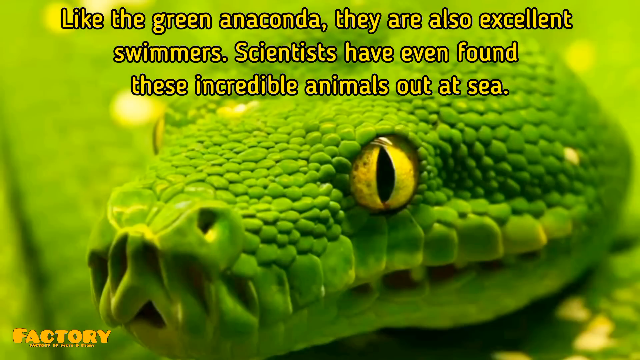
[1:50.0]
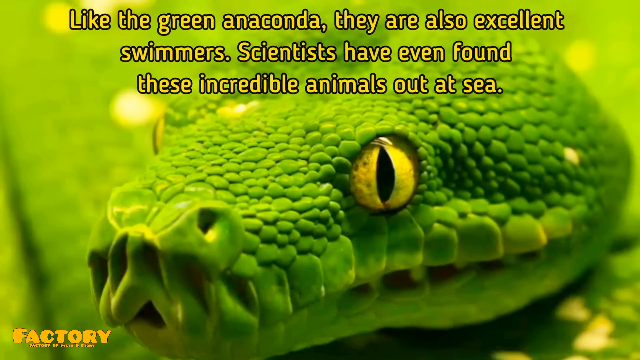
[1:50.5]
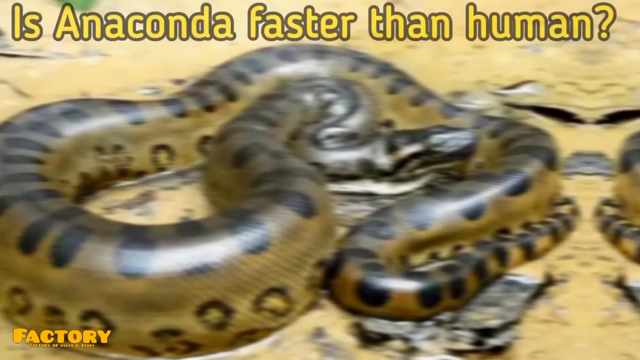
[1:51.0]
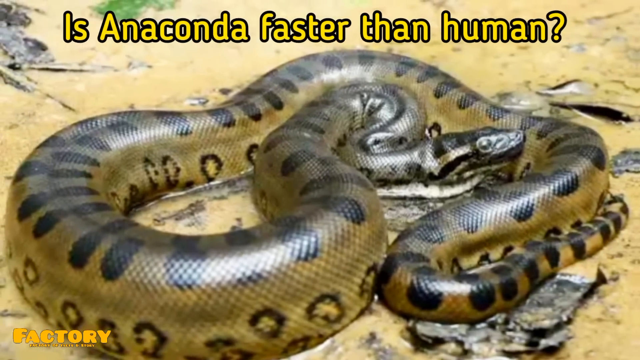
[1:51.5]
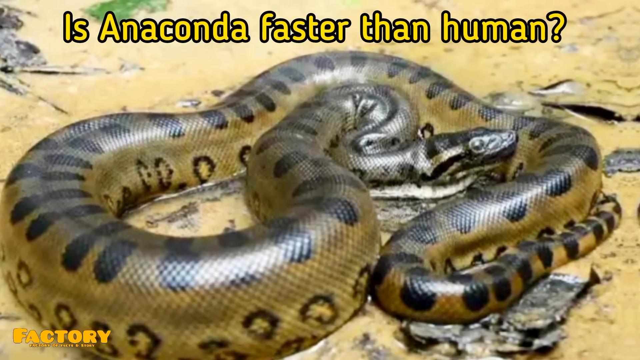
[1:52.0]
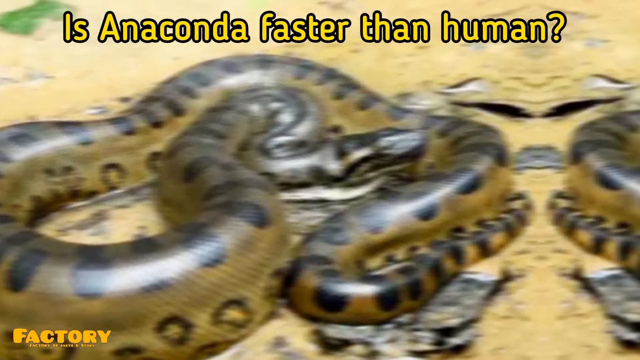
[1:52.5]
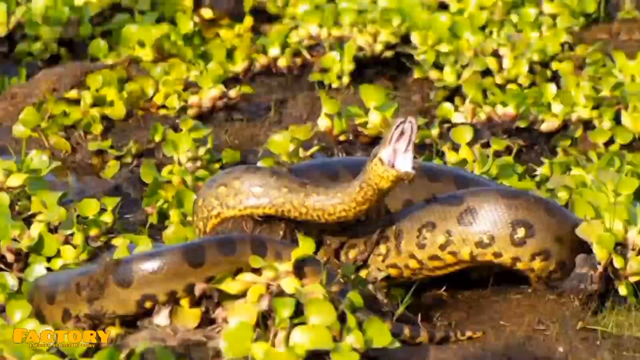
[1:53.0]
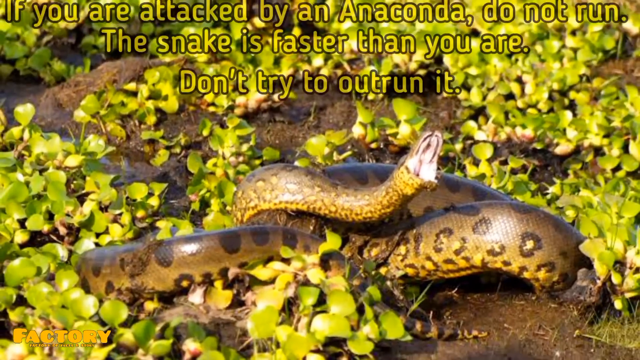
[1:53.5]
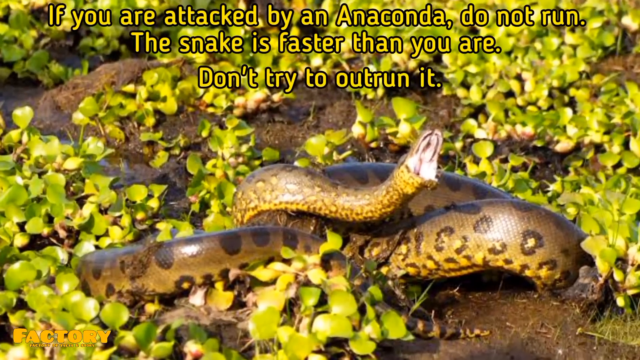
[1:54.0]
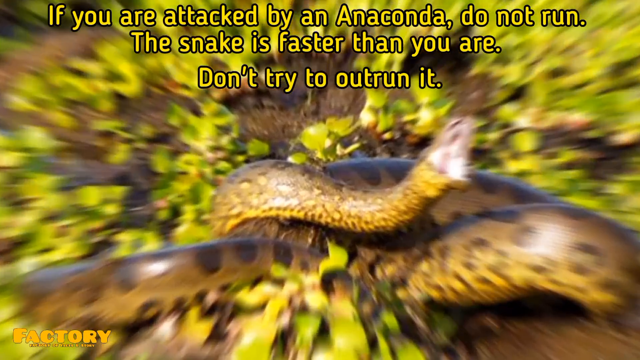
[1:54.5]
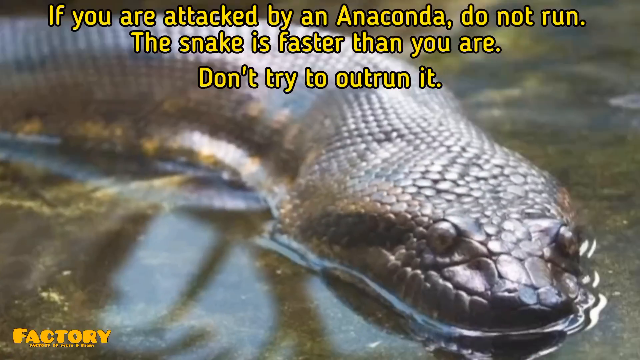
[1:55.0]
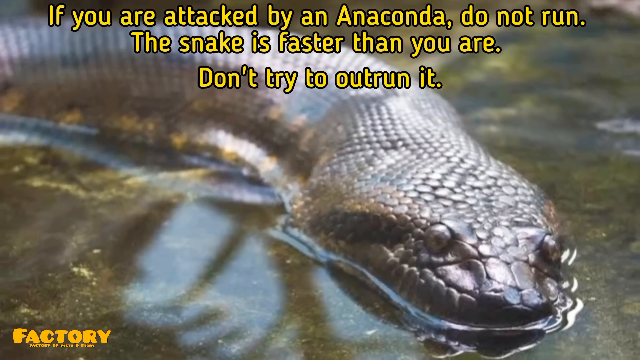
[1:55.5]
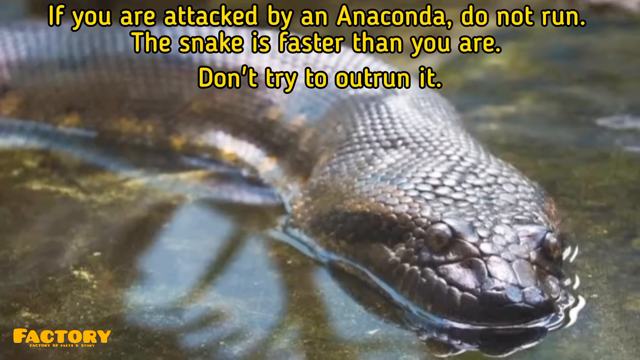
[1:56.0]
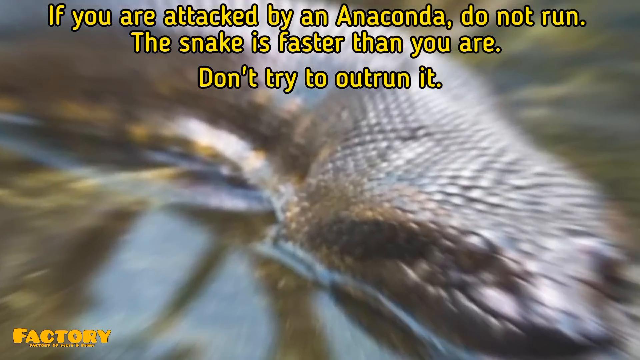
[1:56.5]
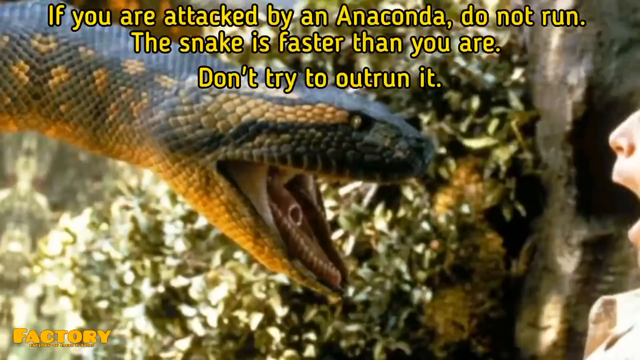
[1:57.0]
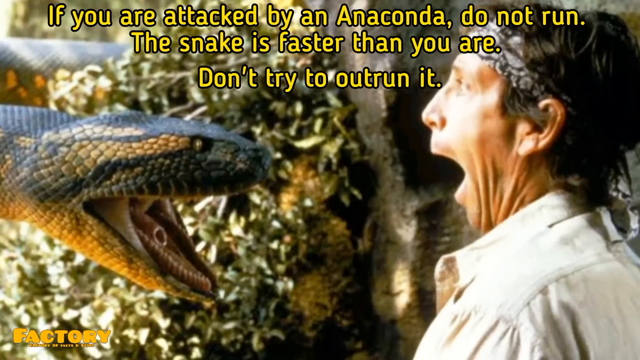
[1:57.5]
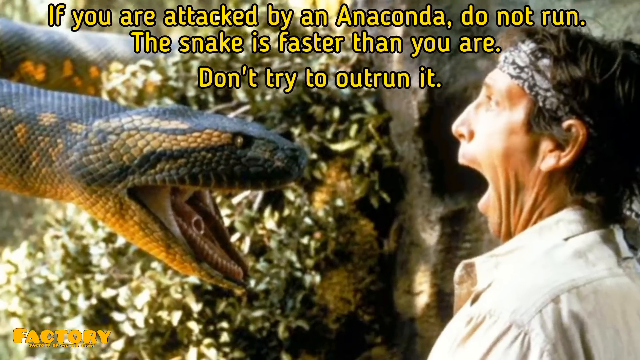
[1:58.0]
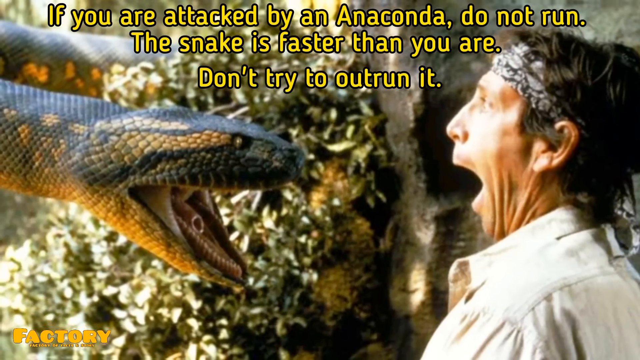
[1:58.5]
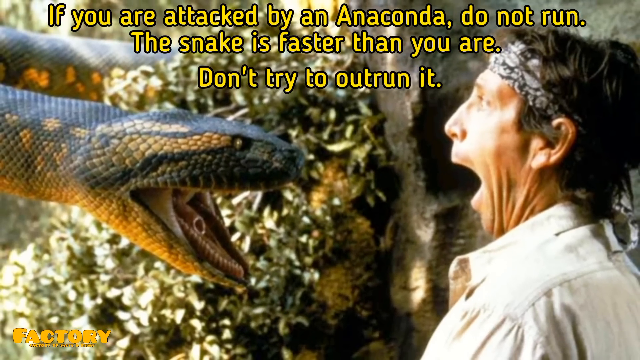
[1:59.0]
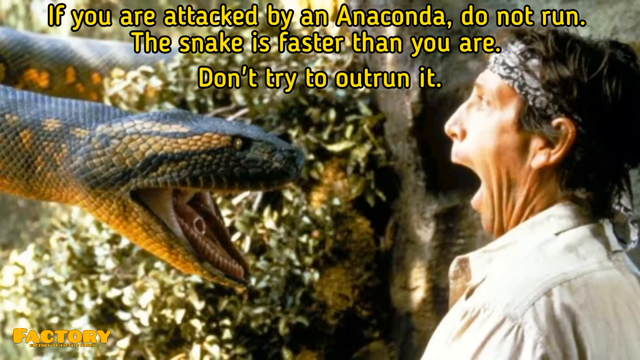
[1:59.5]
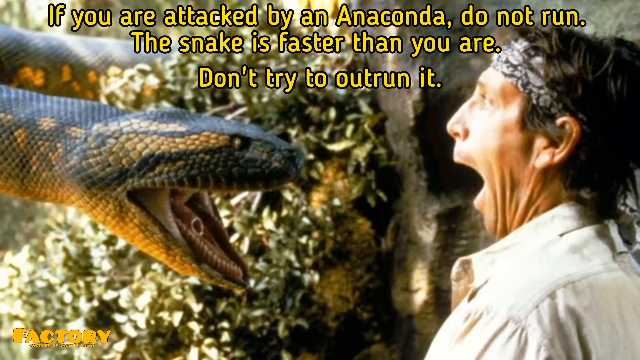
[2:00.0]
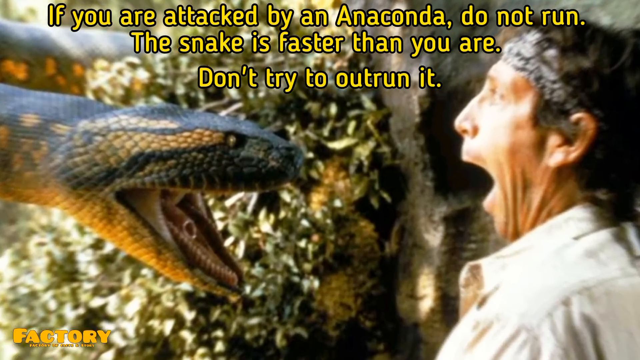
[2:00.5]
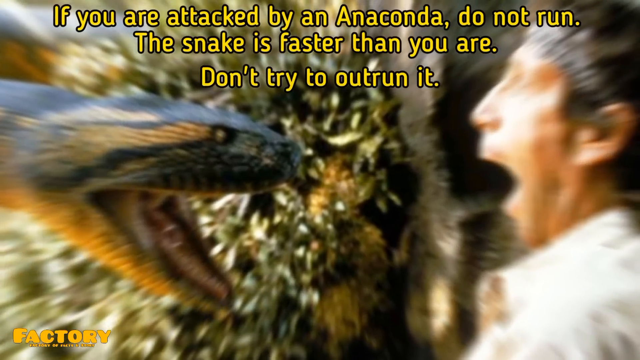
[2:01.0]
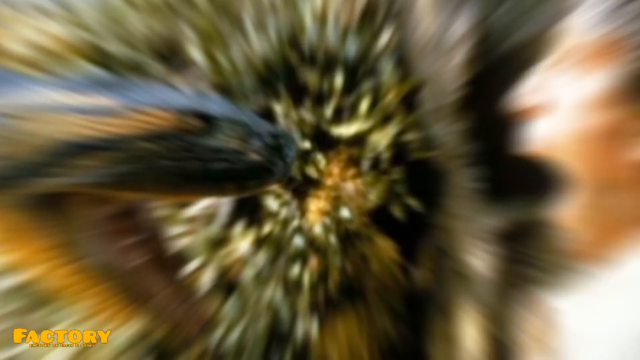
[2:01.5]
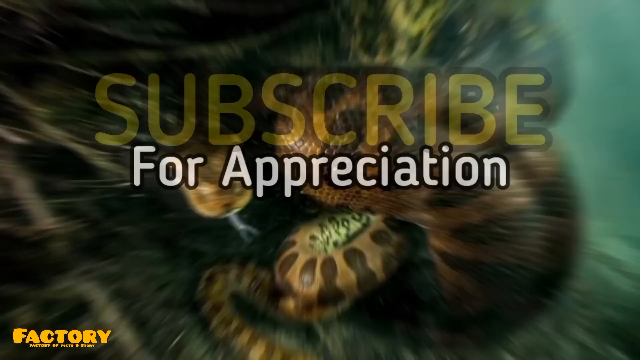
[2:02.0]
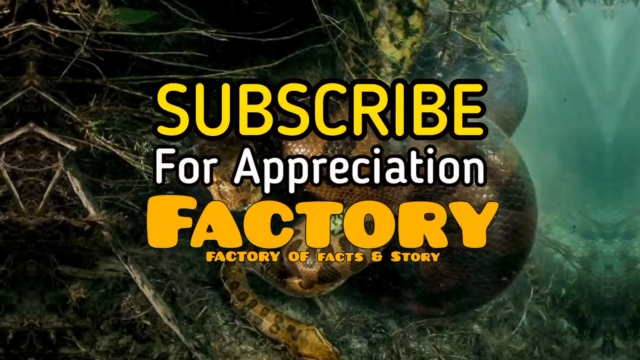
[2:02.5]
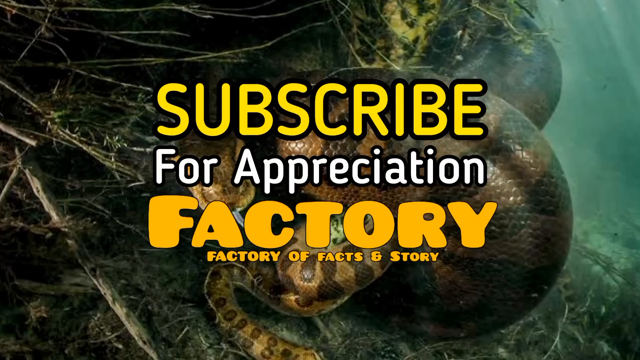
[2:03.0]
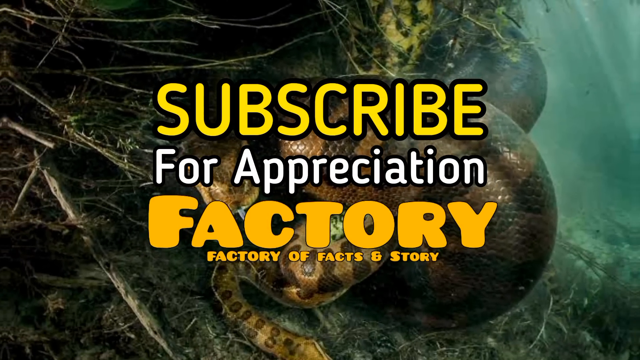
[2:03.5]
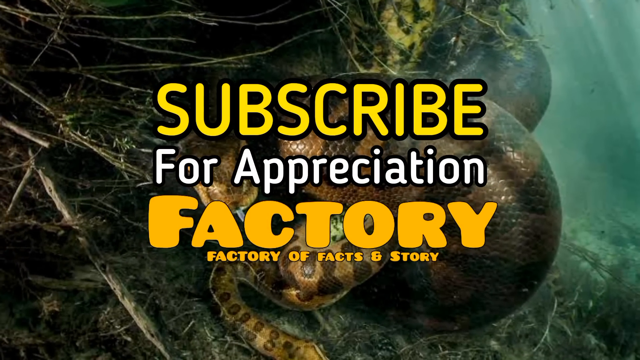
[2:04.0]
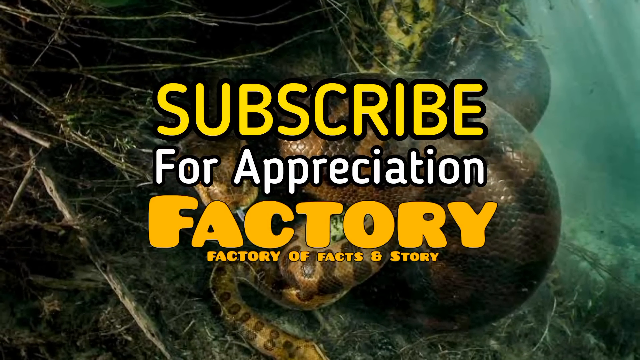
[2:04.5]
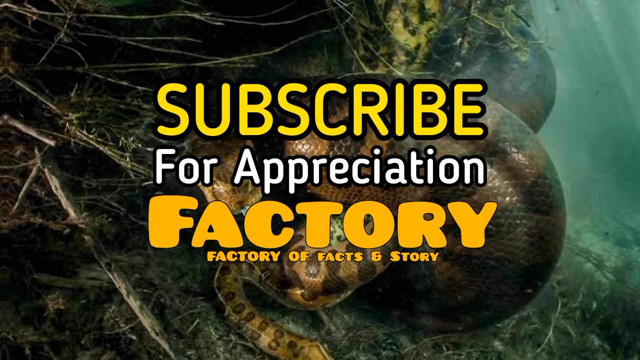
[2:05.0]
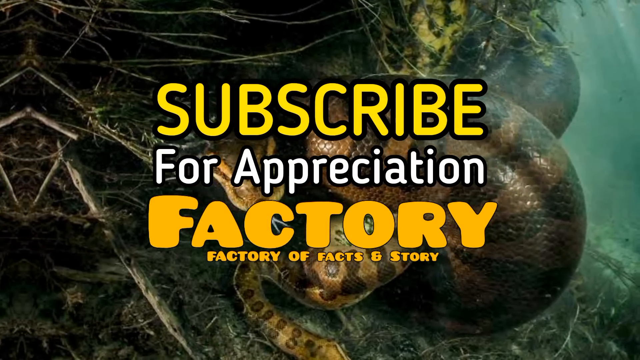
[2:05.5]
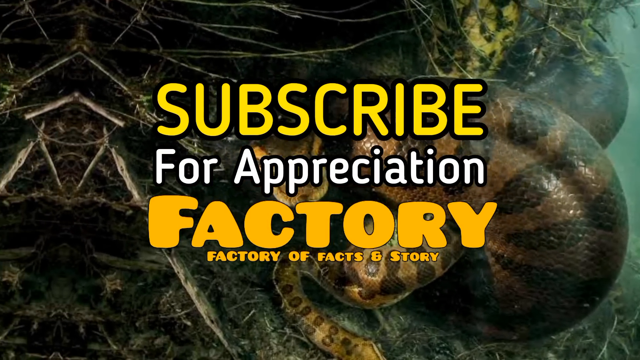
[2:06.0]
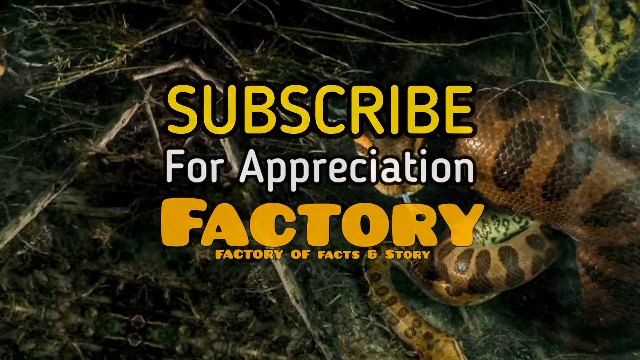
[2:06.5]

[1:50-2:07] The very green snake is shown, then the scene quickly switches to yellow text at the top middle of the screen reading "is anaconda faster than human?" Below it is a large, very brownish anaconda with large black oval shapes on its back. The scene switches to a different anaconda with its mouth open, surrounded by small green leaves. Yellowish text at the top reads "if you are attacked by an anaconda, do not run. The snake is faster than you are. Don't try to outrun it." The scene changes to a close-up of an anaconda in water, and then to a close-up of what appears to be a movie scene featuring an anaconda: a man with a white skin tone and black hair, with a bandana around his forehead, has his mouth wide open, while the anaconda is on the left side with its mouth open, looking directly at the man. The scene changes one last time to text reading "subscribe for appreciation. Factory, factory of facts and story." Behind this text is a final anaconda image, which appears to be underwater, brownish with large black spots.